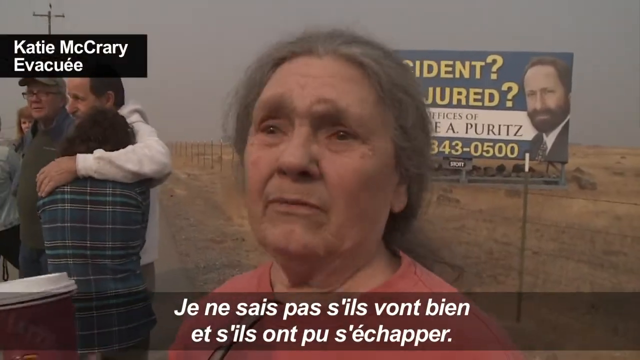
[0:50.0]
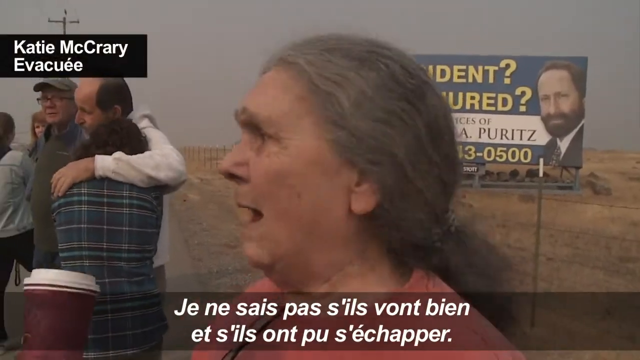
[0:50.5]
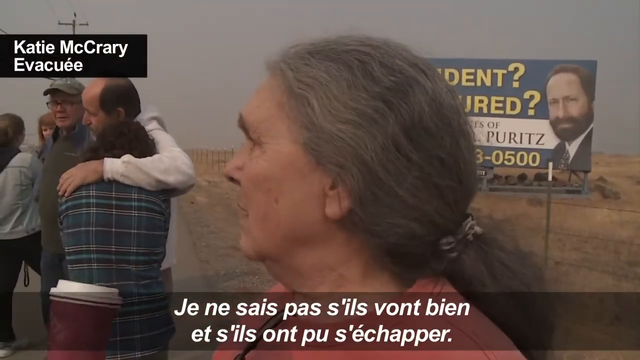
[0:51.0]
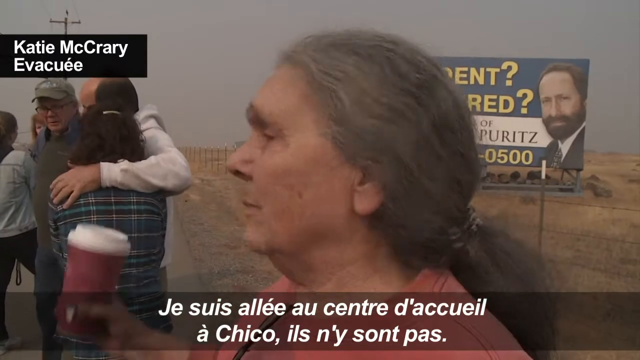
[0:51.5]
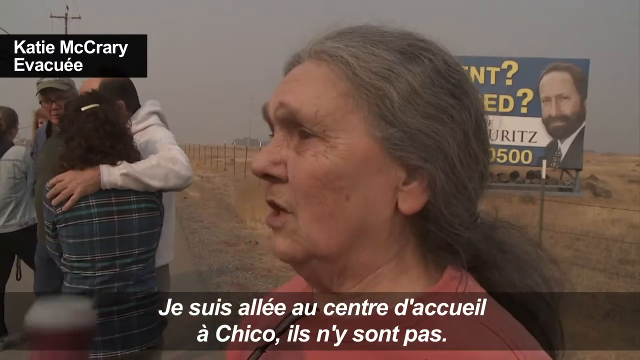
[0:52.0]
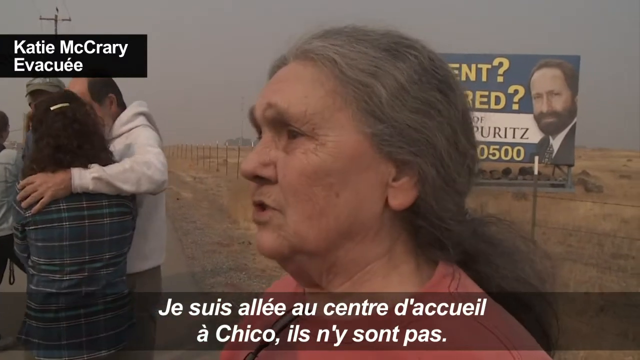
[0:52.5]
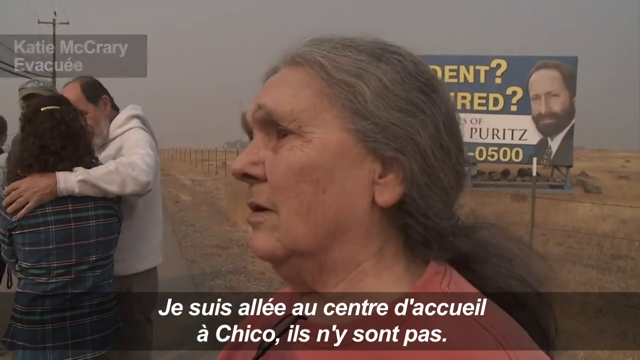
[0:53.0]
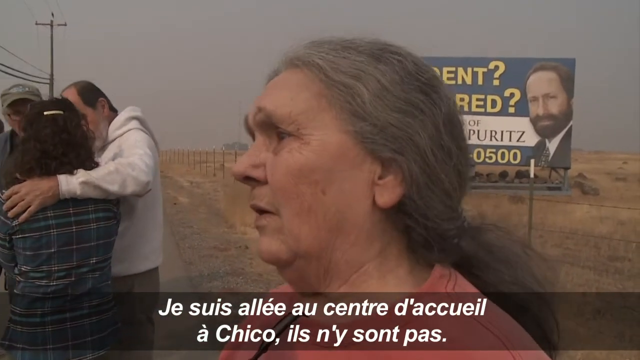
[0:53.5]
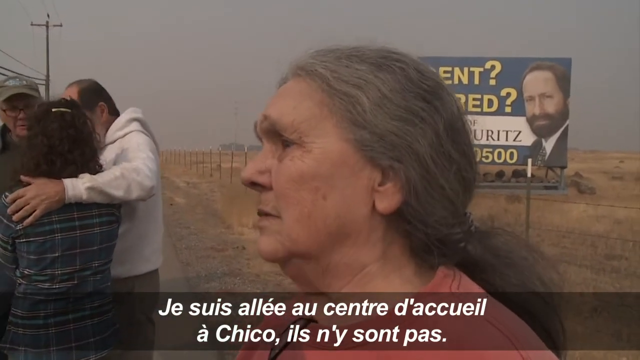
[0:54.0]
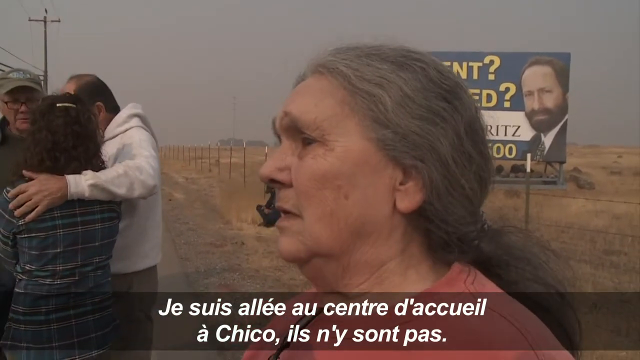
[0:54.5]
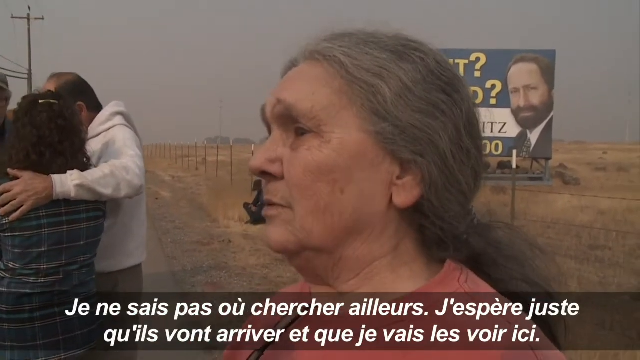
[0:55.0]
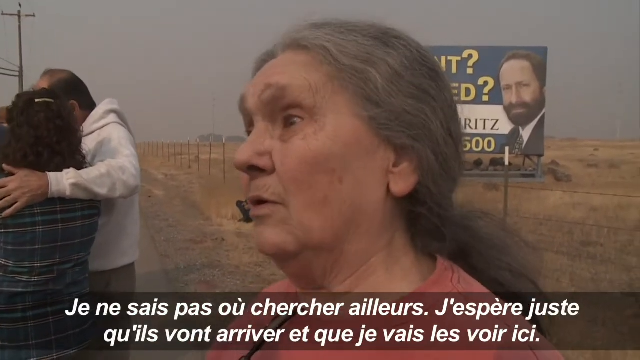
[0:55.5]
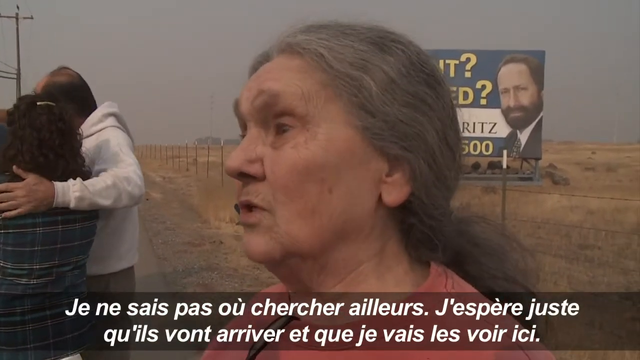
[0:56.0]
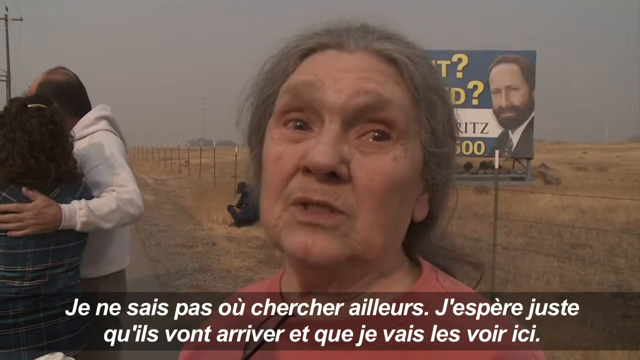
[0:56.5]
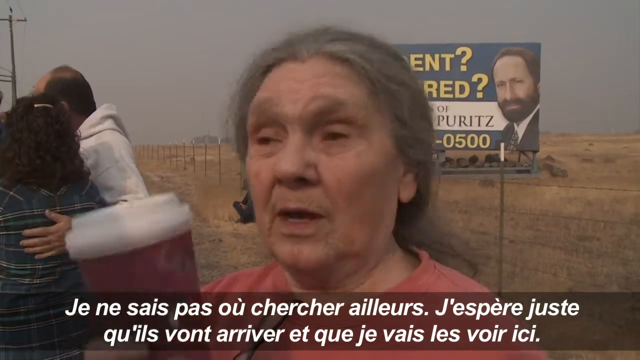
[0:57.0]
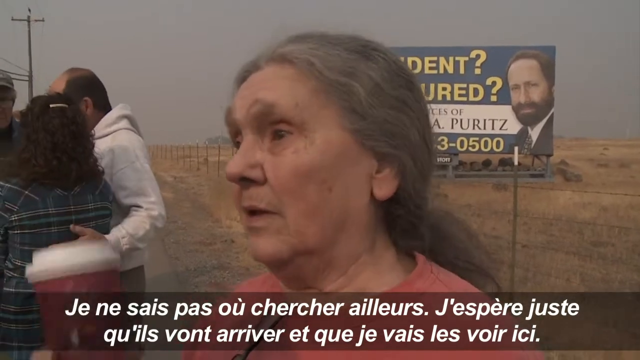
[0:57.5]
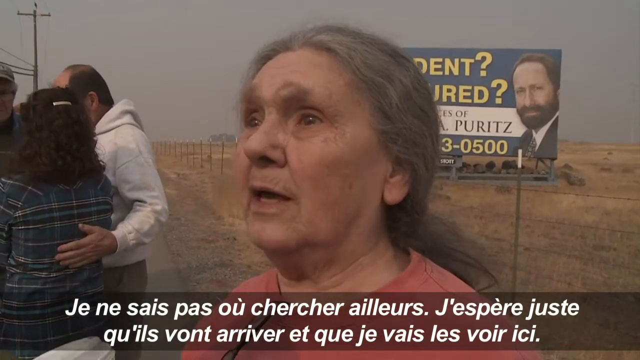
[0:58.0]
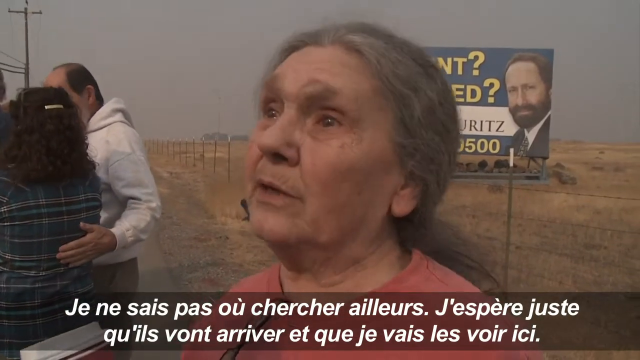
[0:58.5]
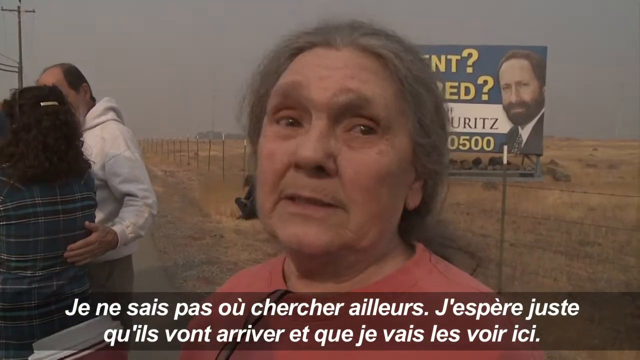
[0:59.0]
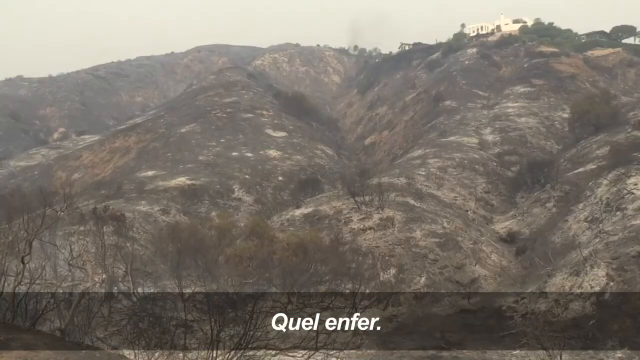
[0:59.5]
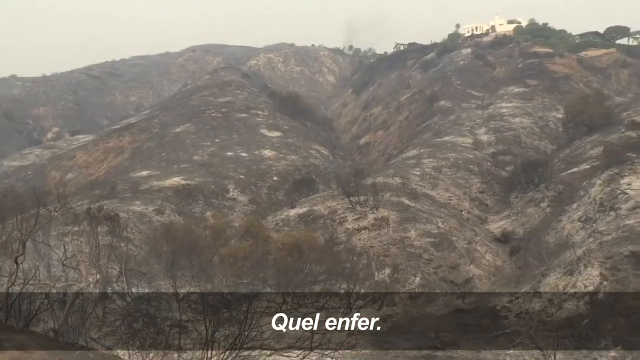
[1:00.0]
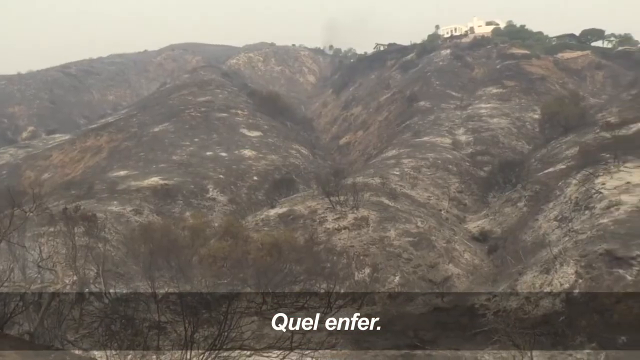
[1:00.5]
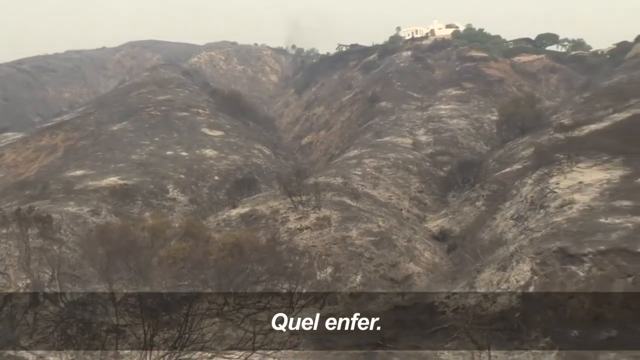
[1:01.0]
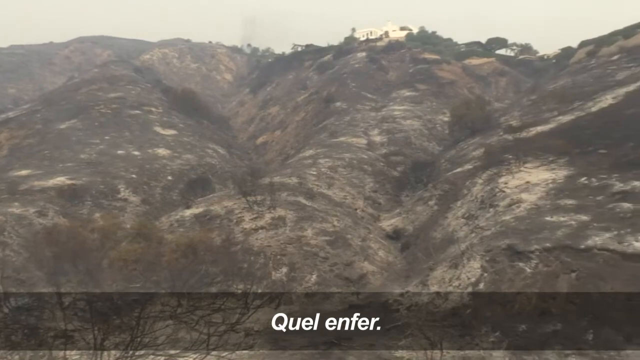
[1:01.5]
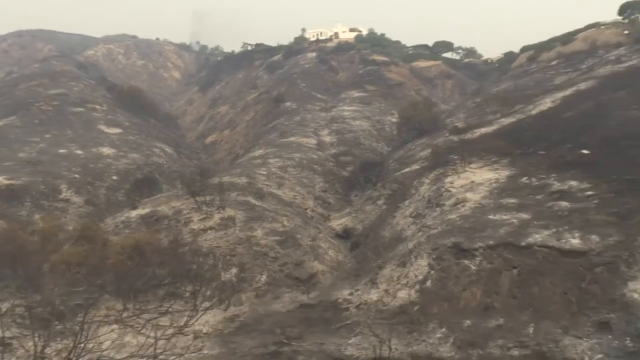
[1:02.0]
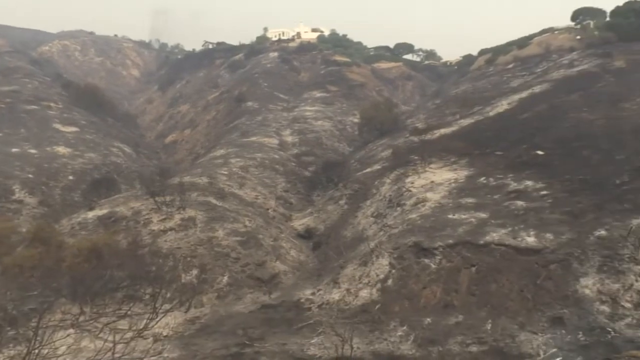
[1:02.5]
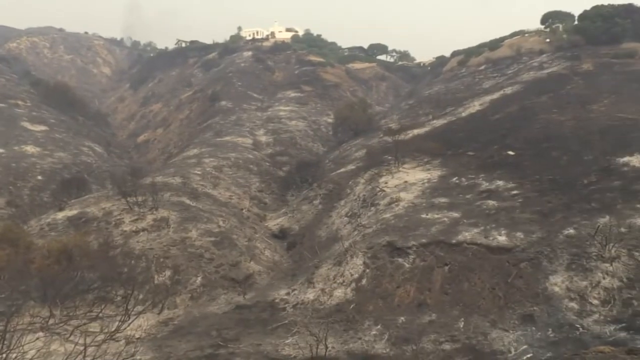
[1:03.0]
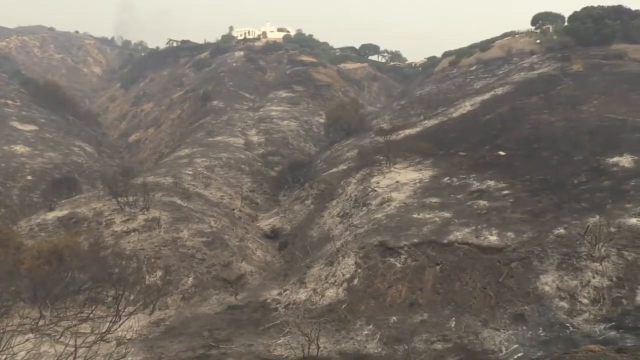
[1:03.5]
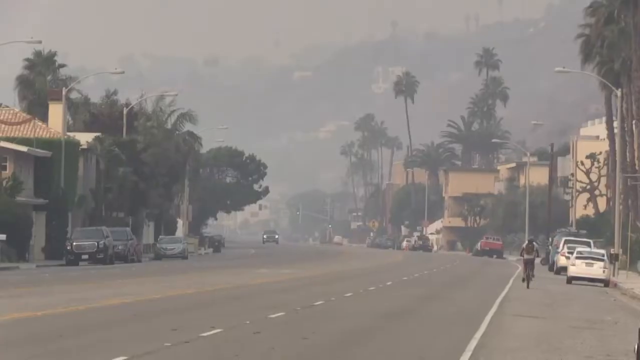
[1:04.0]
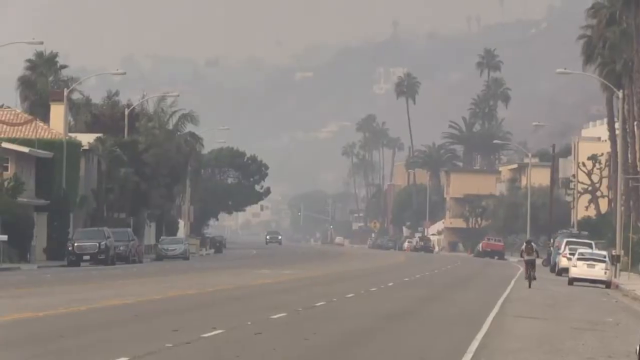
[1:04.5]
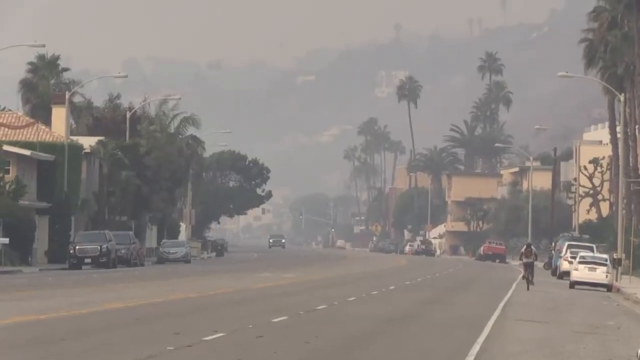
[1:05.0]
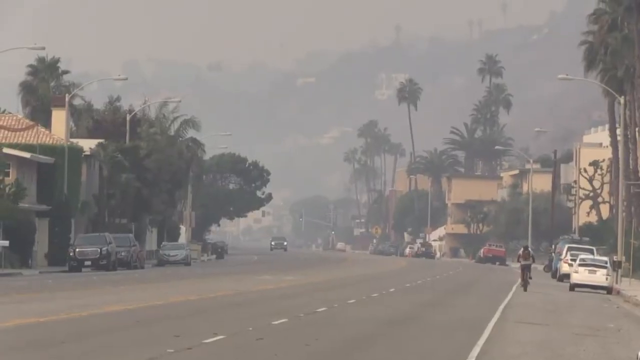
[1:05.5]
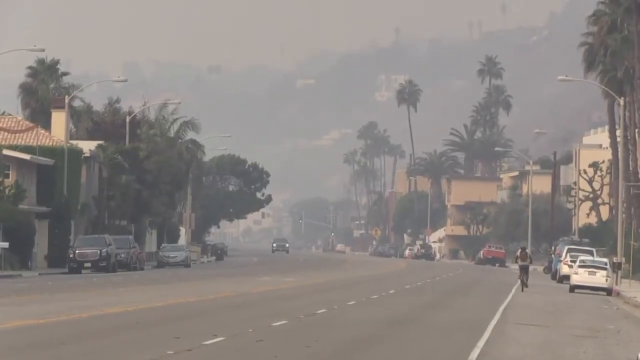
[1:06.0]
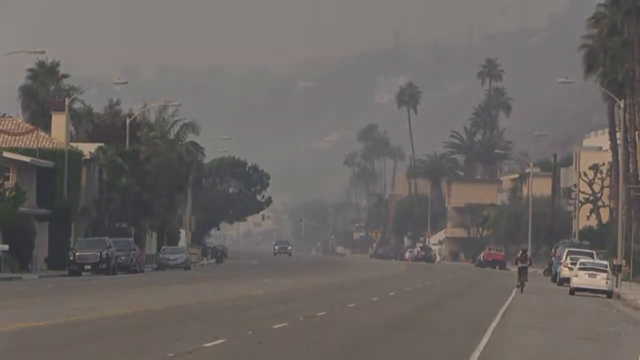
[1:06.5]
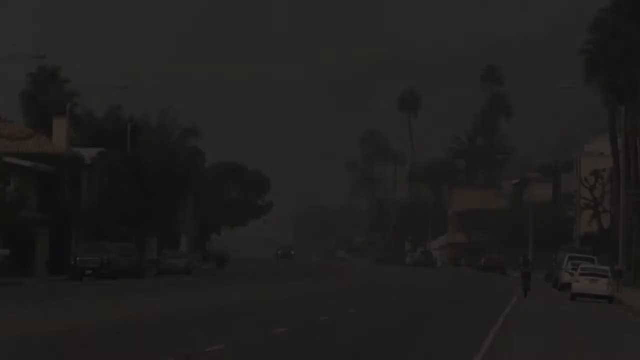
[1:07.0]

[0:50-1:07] The destroyed landscape in California shows many demolished, broken-down cars. Many people and trees are visible, and the roads are blocked as rain continues. Fire trucks arrive for the rescue, and firemen speak to the camera. A lady is crying behind another lady. Someone is crying while a man holds and embraces them. People appear distressed.